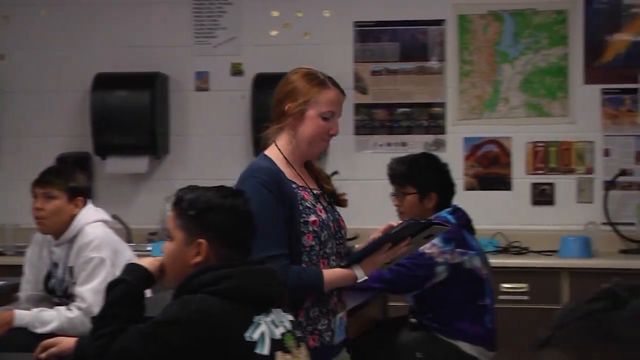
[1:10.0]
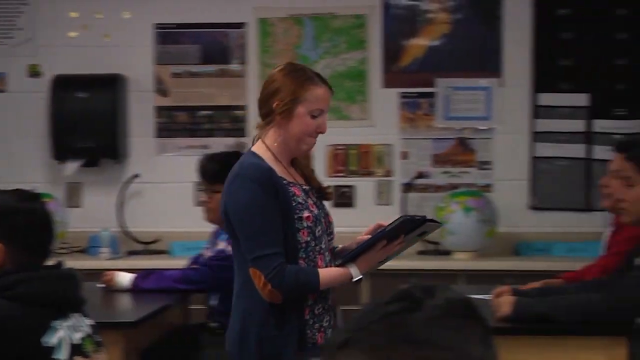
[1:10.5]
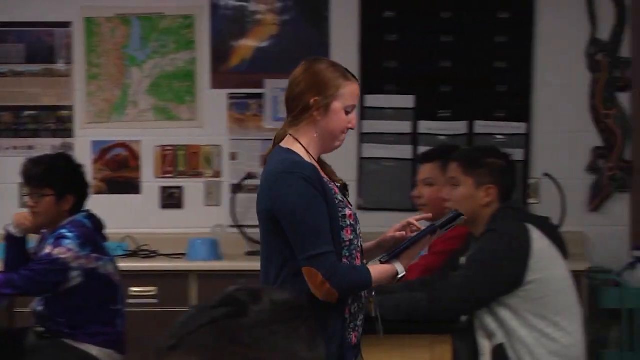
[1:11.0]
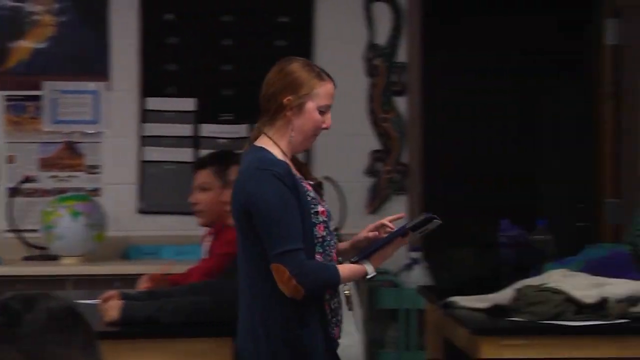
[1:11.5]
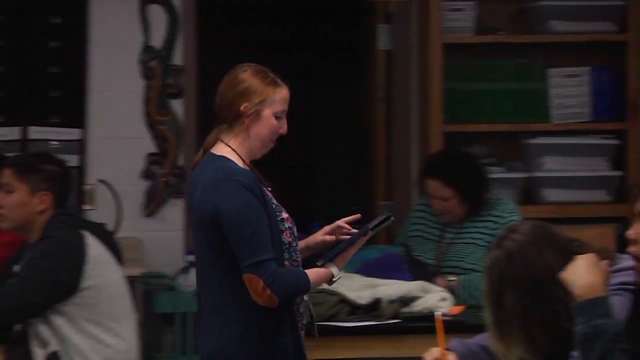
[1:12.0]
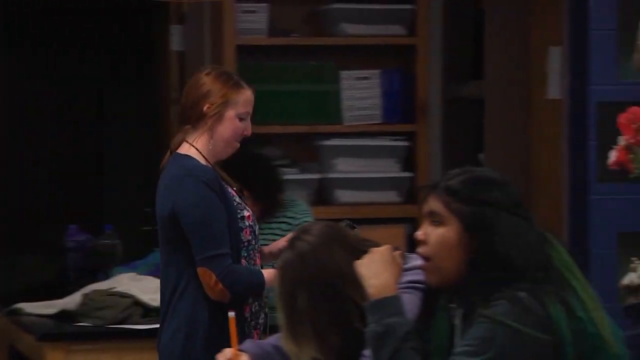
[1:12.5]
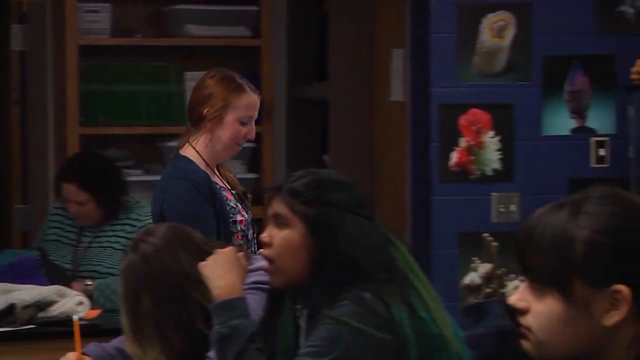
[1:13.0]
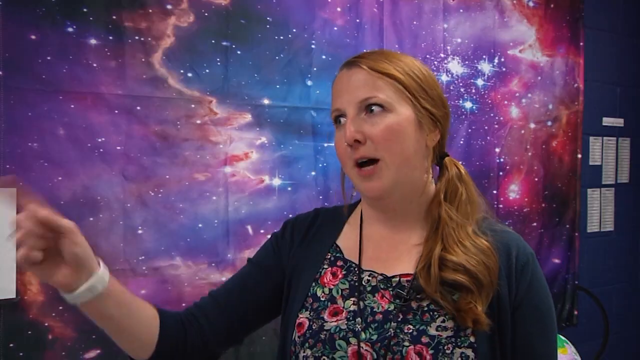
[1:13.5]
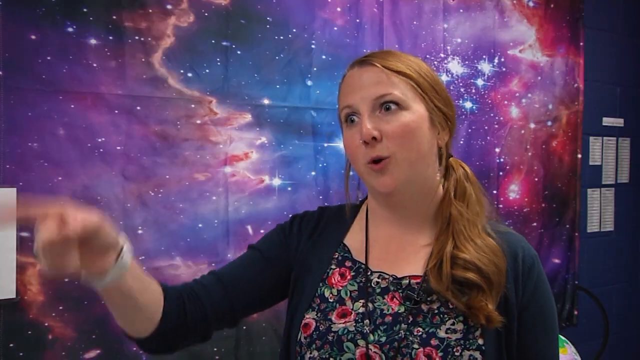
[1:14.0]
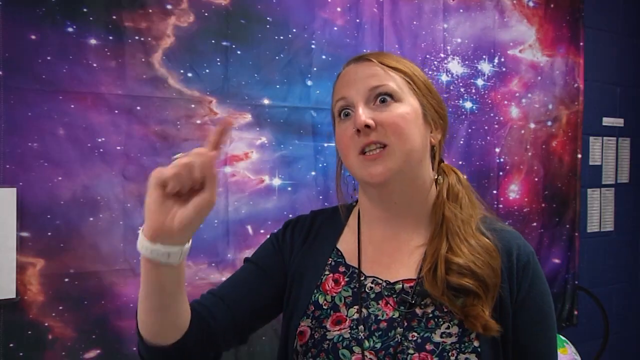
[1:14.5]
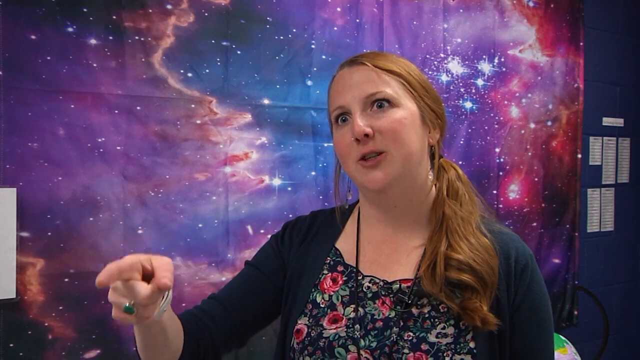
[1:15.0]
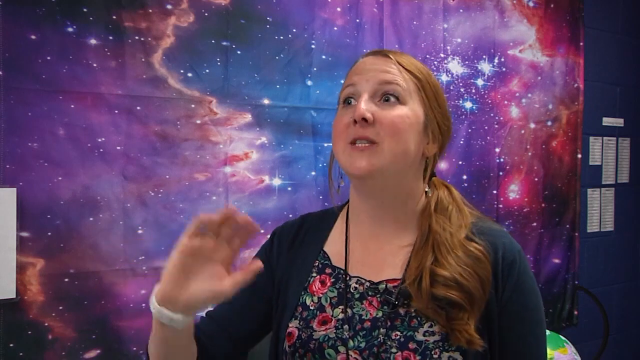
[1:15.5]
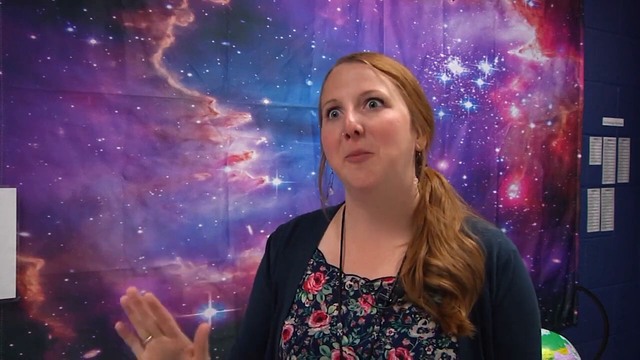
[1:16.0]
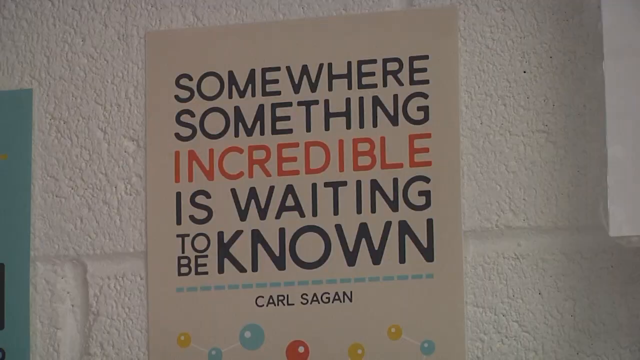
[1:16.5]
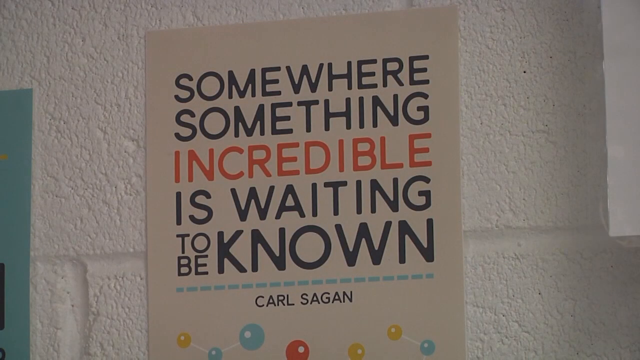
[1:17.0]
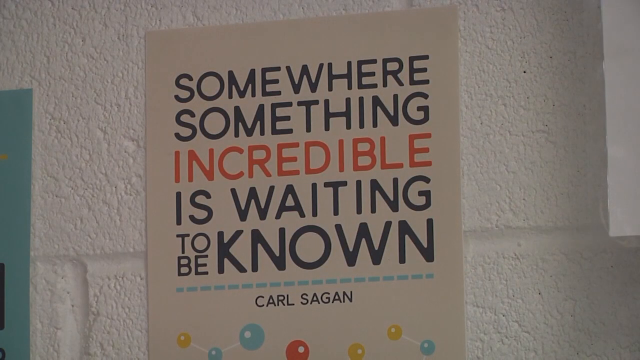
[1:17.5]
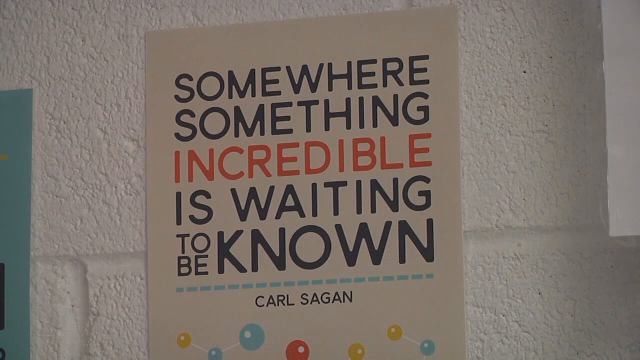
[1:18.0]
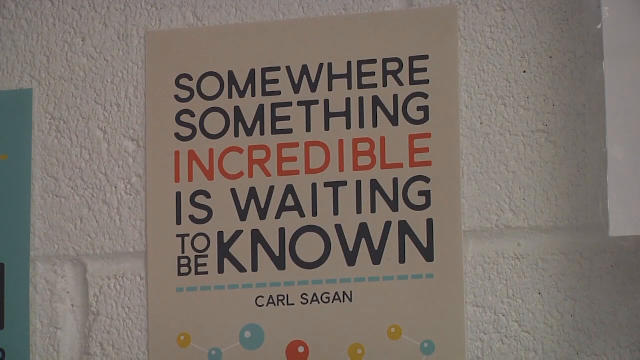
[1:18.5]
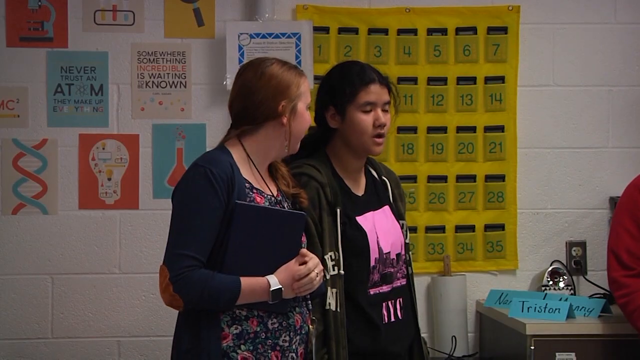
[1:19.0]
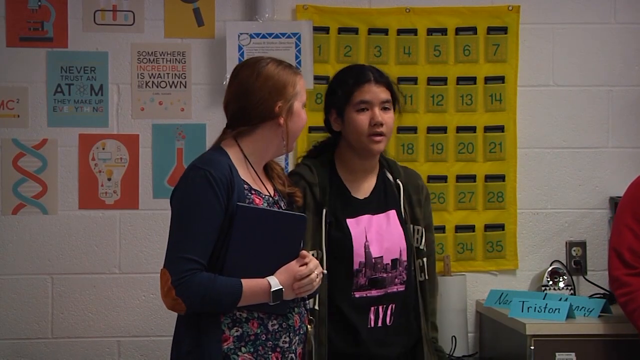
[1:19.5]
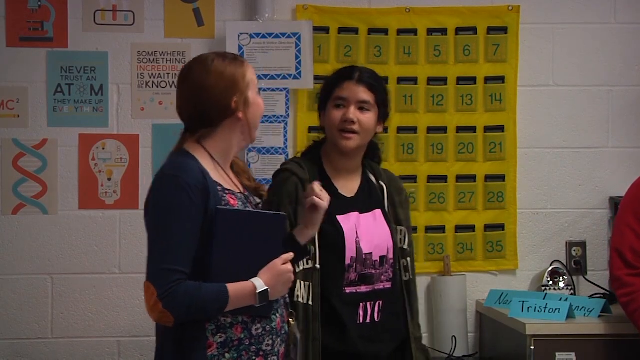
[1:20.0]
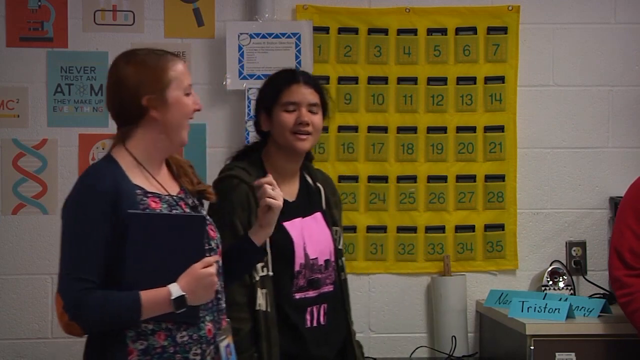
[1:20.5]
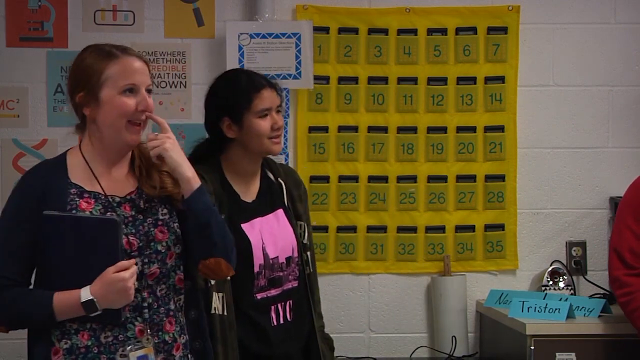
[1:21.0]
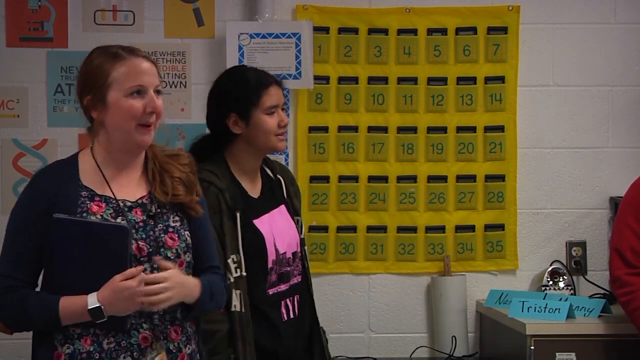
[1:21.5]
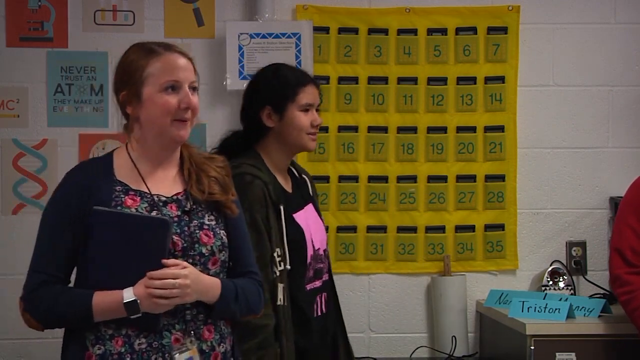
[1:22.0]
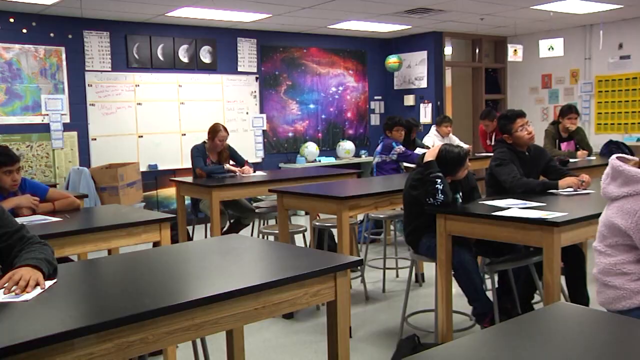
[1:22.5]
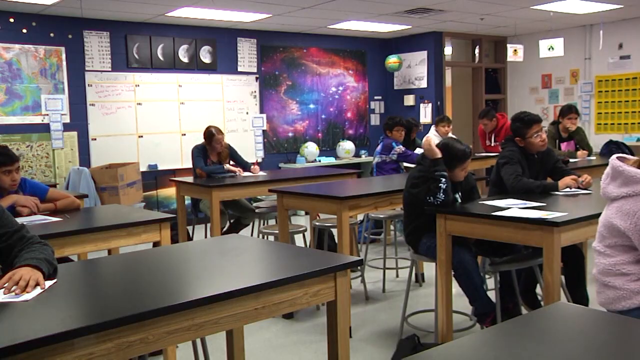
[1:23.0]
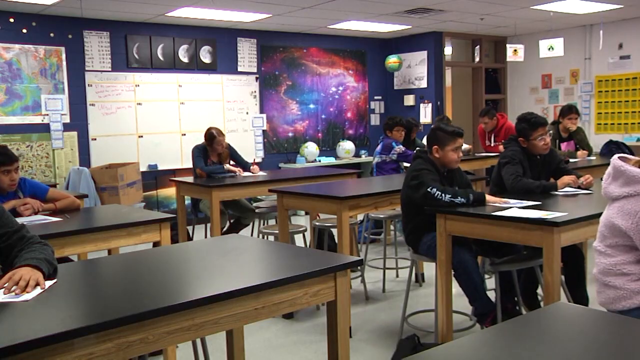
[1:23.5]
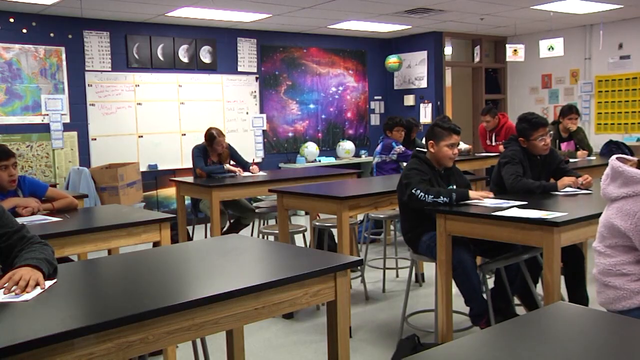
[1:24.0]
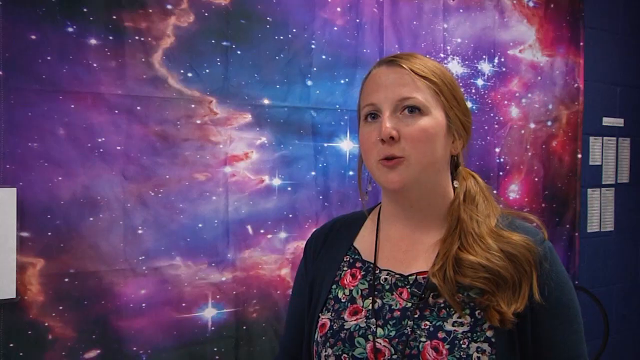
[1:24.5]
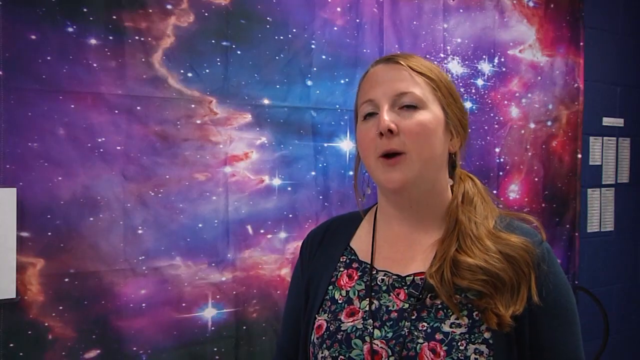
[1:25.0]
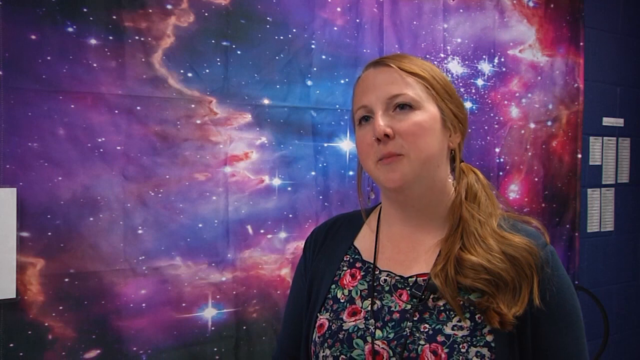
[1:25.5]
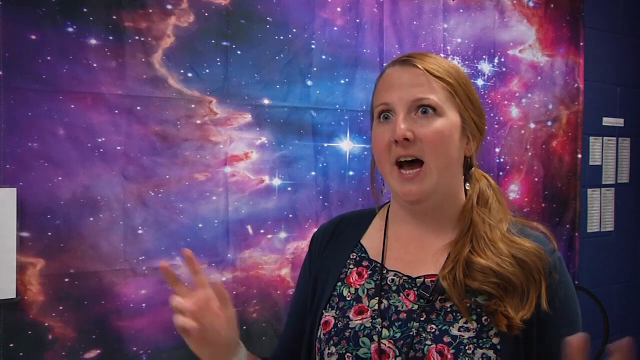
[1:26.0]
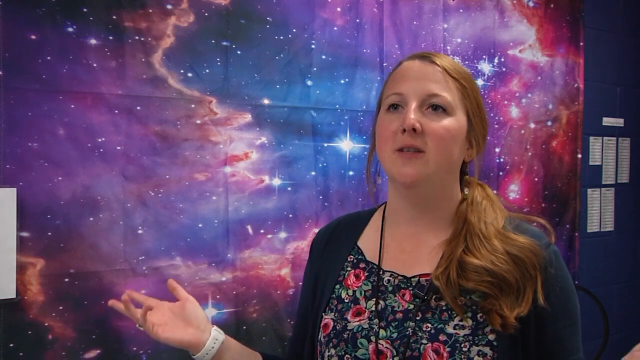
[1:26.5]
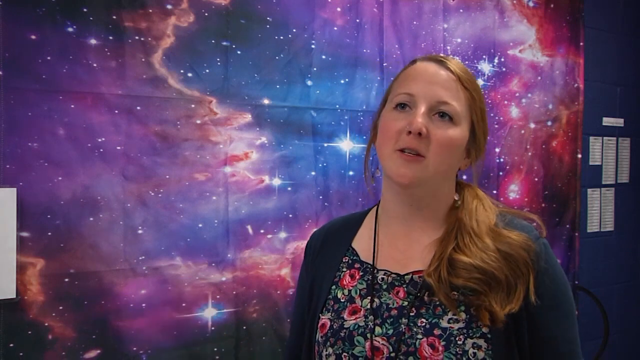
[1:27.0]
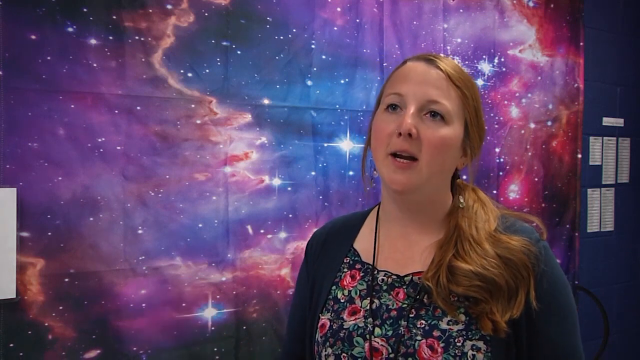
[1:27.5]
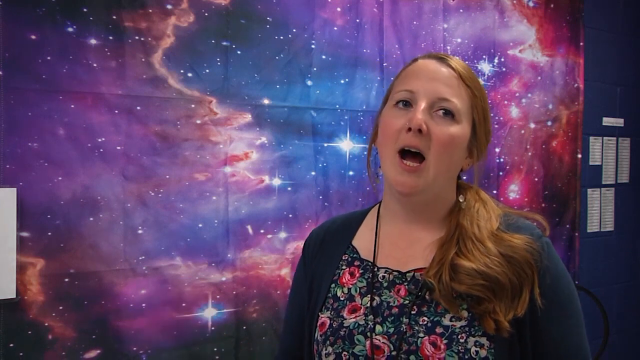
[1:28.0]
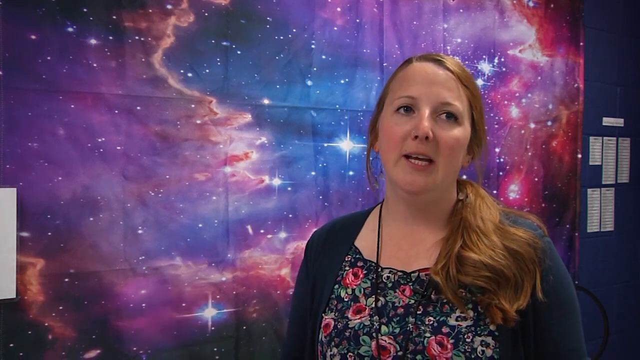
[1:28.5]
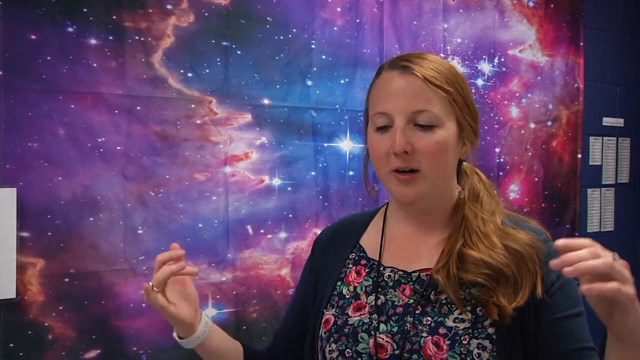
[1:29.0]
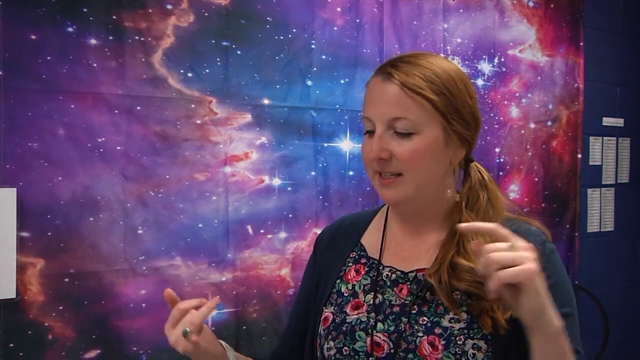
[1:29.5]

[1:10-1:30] A Caucasian woman with red hair holding a black tablet walks across a classroom where multiple students are sitting. The camera pans right to follow her as she keeps walking, looking down at the tablet screen. The scene transitions to her speaking in front of a poster of a universe with twinkling stars; she waves her hands with her pointer finger extended, then gestures with an open palm as she continues. Next, a poster on top of a white wall has a cream background with the words "somewhere something incredible is waiting to be known", the word "incredible" in orange. The red-haired woman then speaks to a student with black hair wearing a black t-shirt with a pink cityscape on the front; the two females laugh before holding a neutral gaze. The scene shifts to a classroom with silvery chairs and wooden desks with black tops, students sitting and writing all over the room. Once again the red-haired woman stands in front of the universe poster, talking while gesturing with her hands.